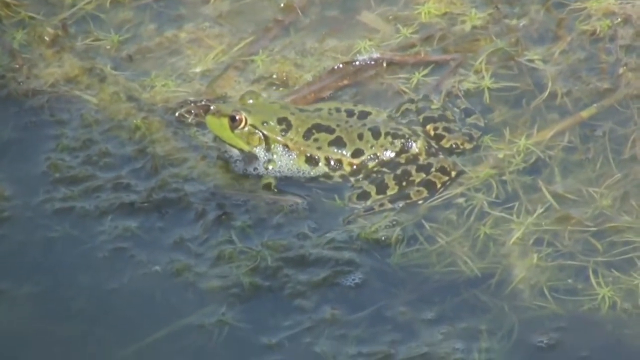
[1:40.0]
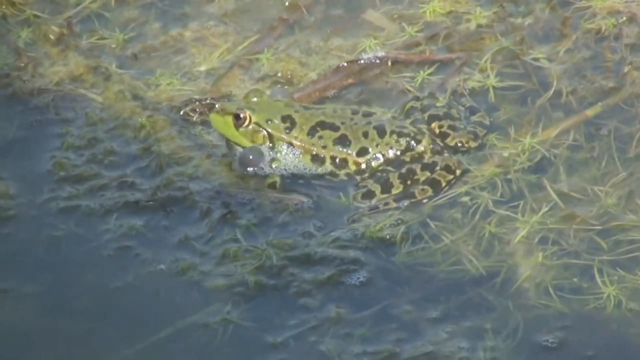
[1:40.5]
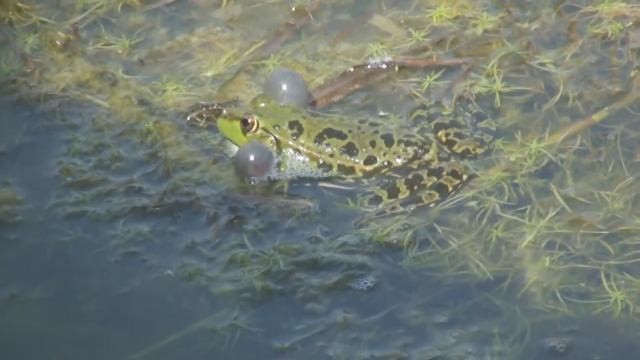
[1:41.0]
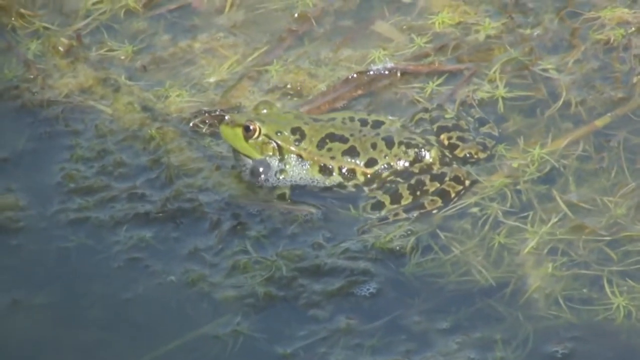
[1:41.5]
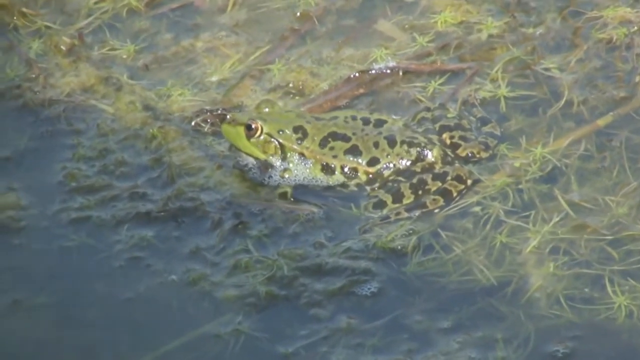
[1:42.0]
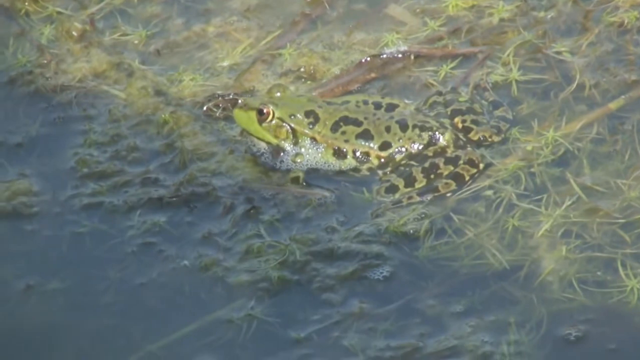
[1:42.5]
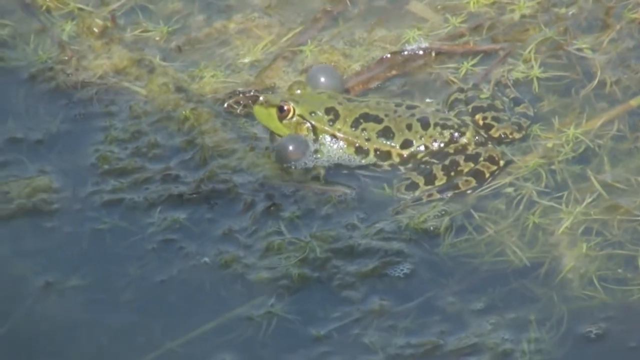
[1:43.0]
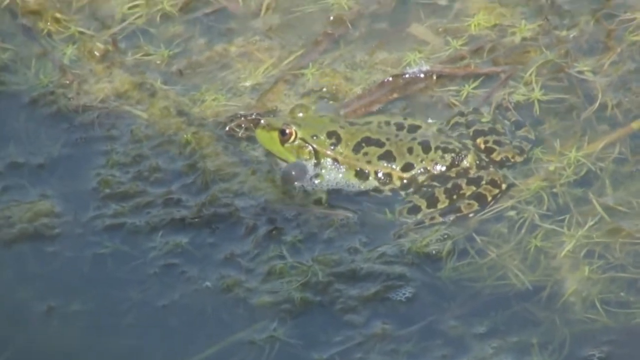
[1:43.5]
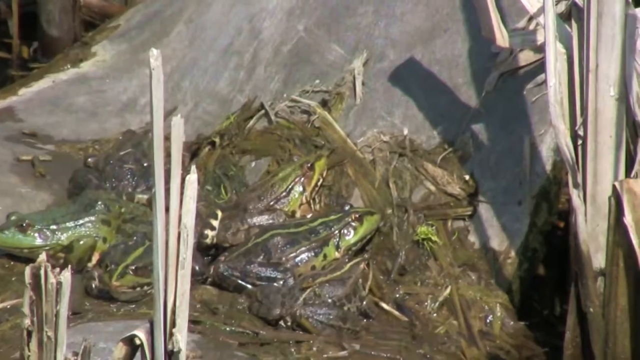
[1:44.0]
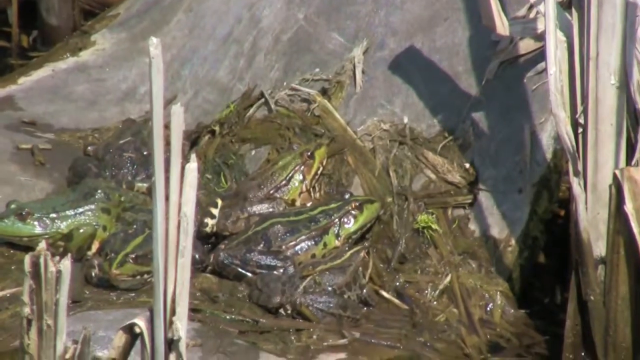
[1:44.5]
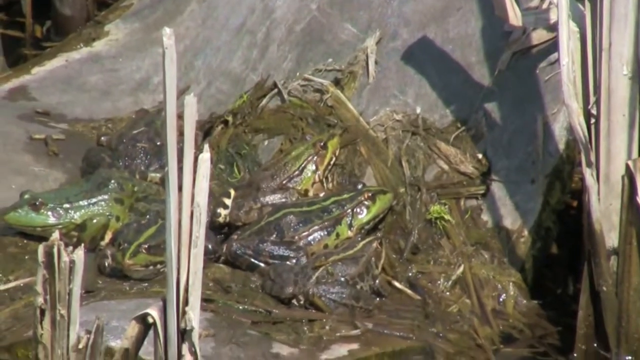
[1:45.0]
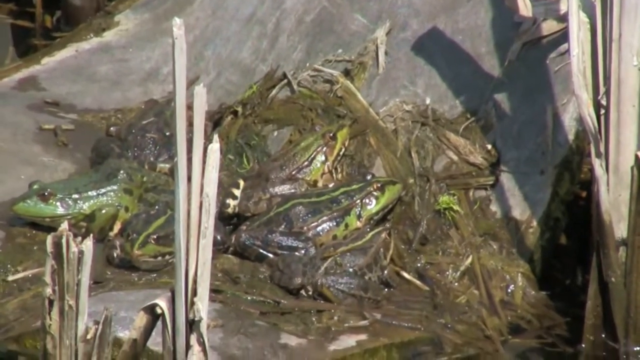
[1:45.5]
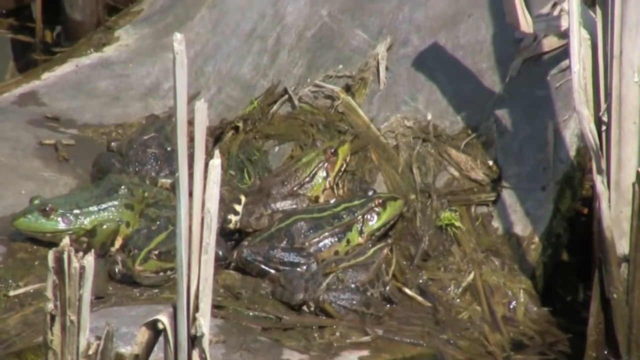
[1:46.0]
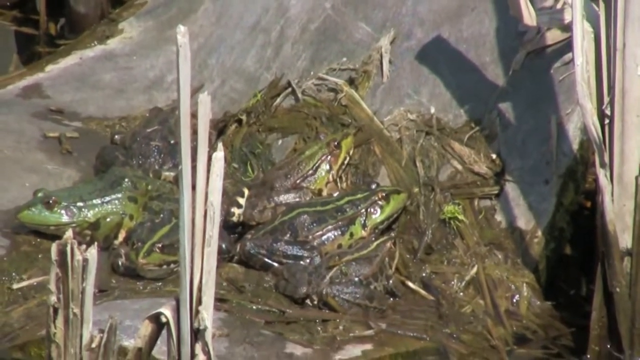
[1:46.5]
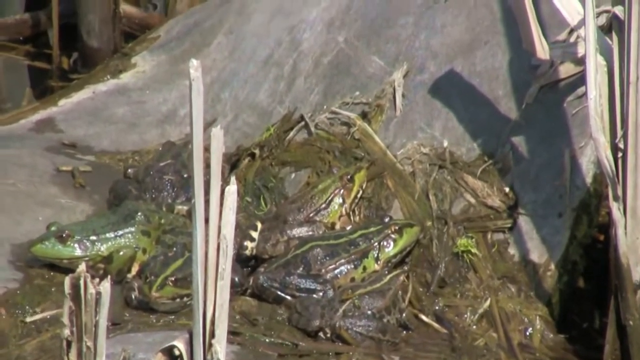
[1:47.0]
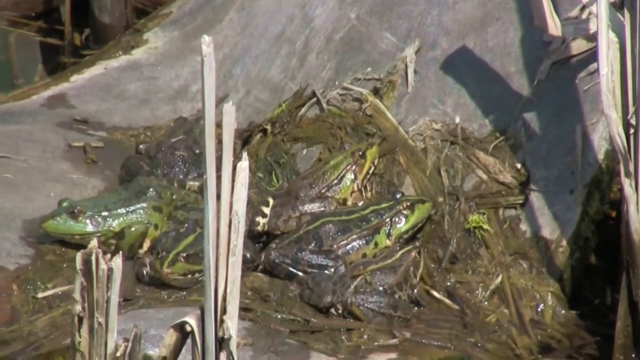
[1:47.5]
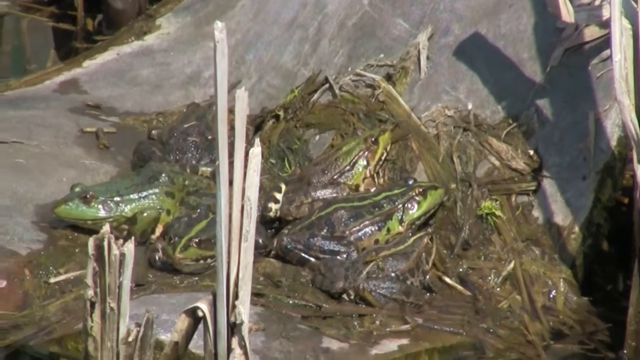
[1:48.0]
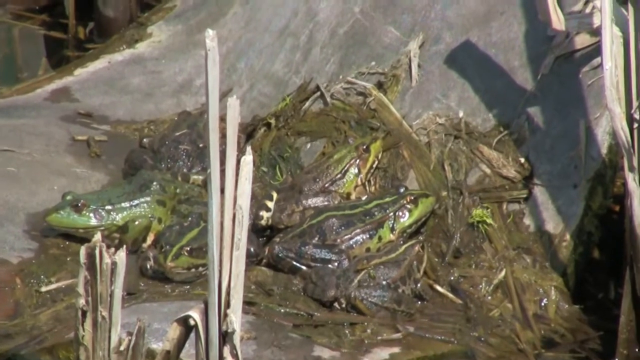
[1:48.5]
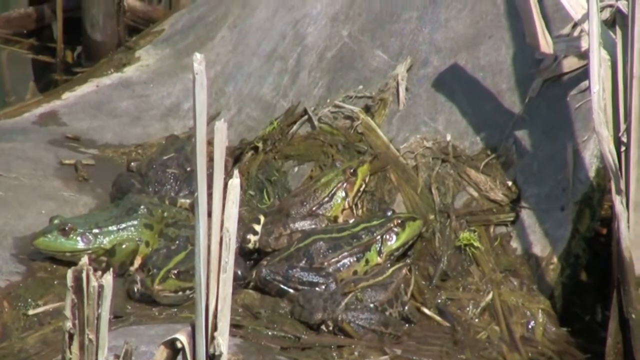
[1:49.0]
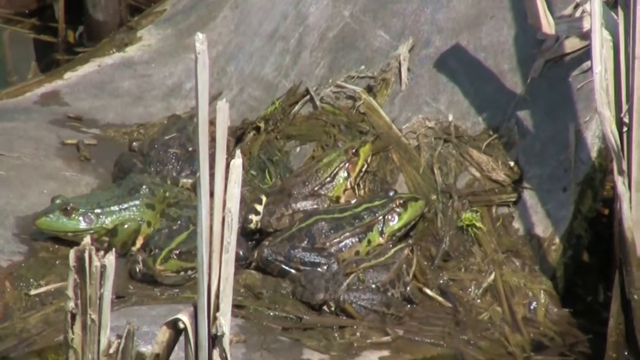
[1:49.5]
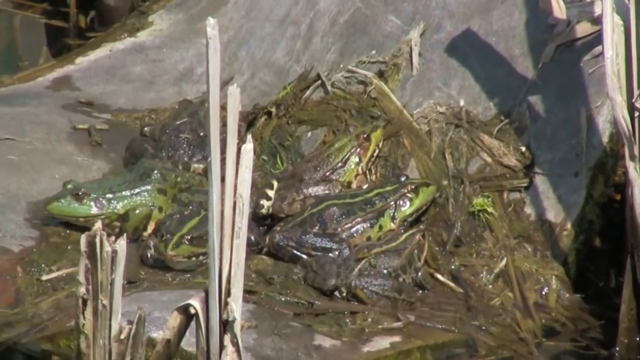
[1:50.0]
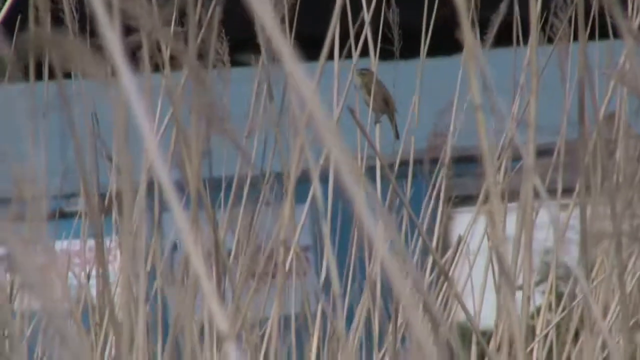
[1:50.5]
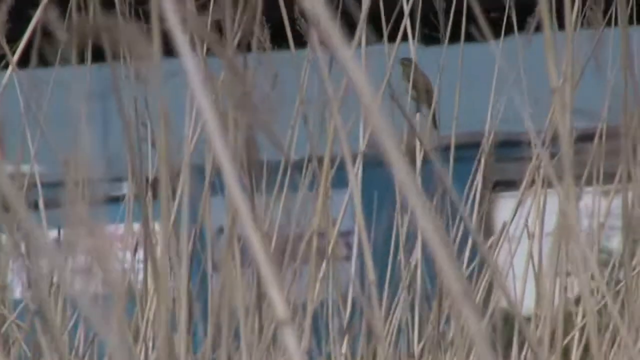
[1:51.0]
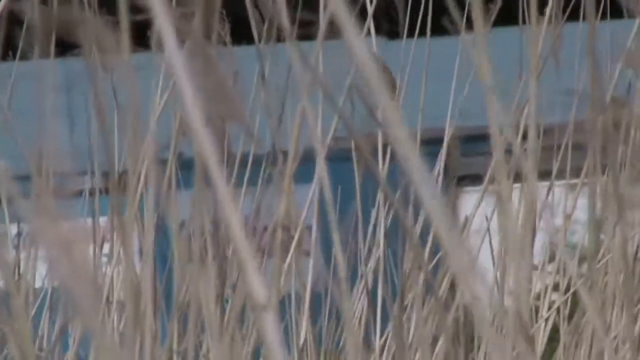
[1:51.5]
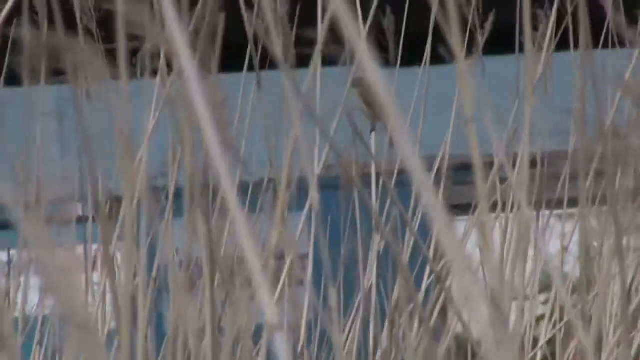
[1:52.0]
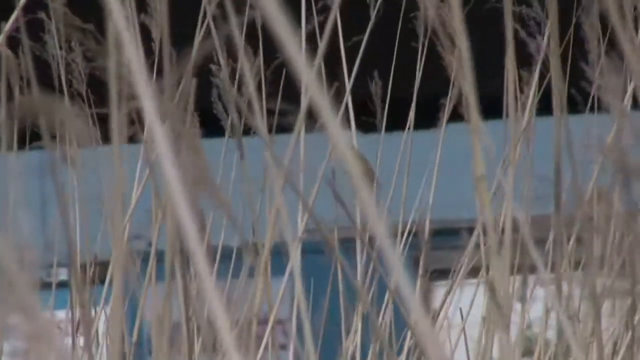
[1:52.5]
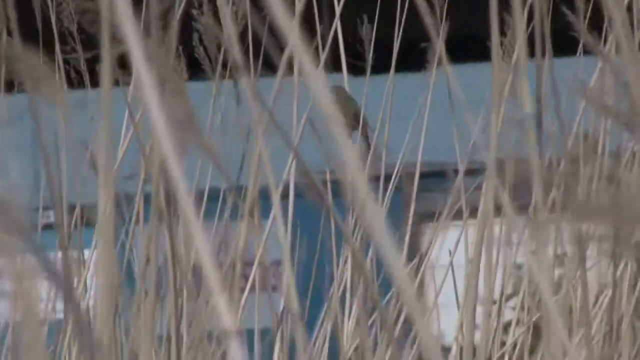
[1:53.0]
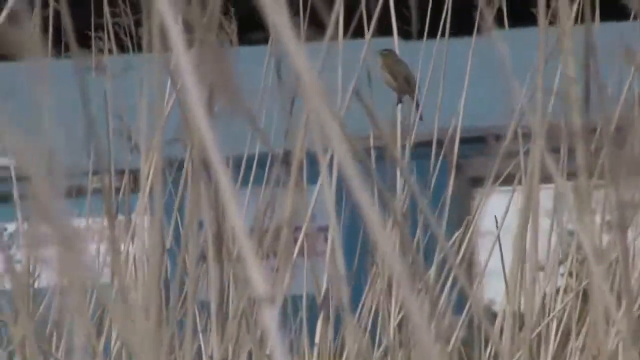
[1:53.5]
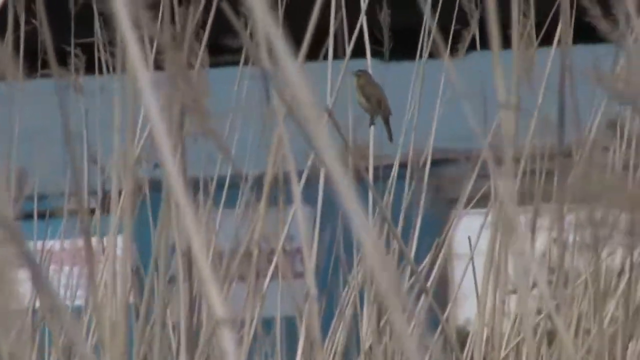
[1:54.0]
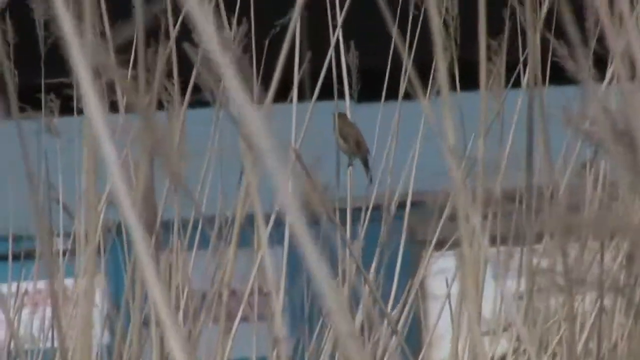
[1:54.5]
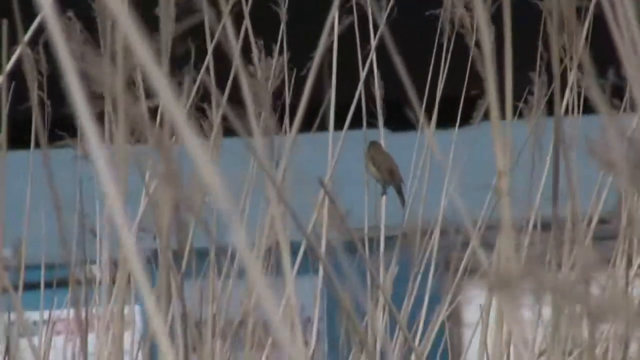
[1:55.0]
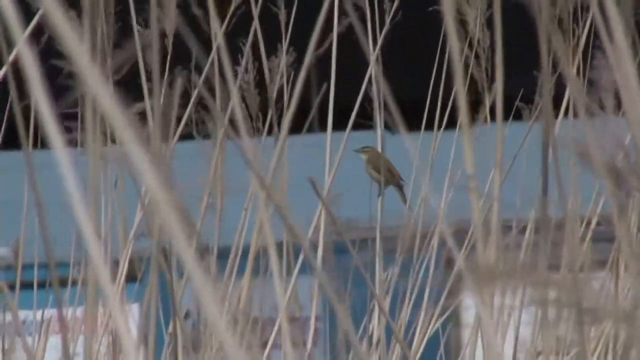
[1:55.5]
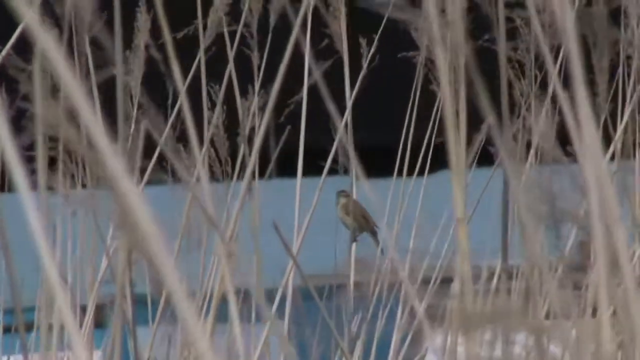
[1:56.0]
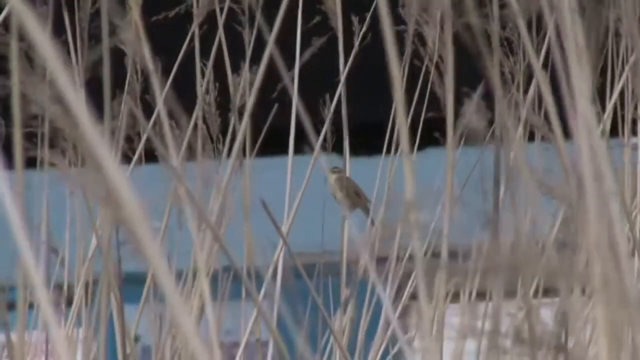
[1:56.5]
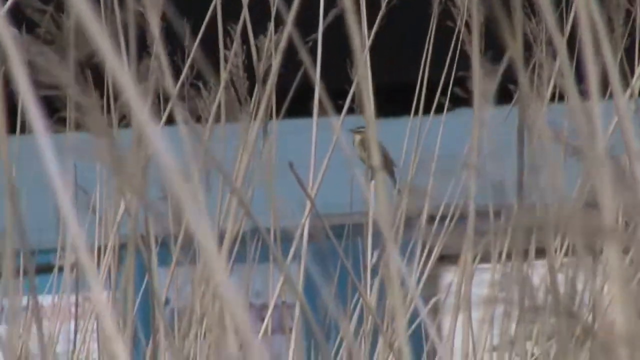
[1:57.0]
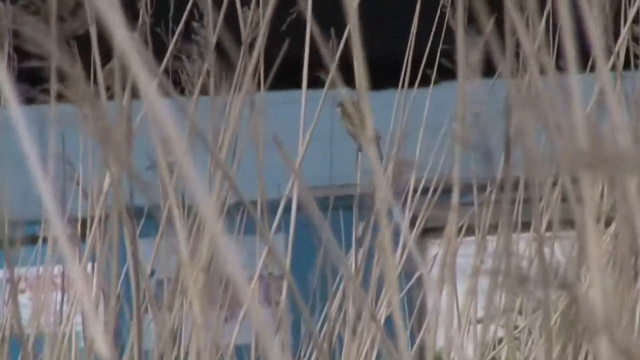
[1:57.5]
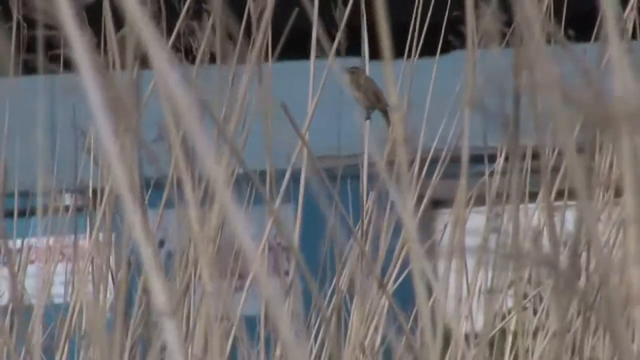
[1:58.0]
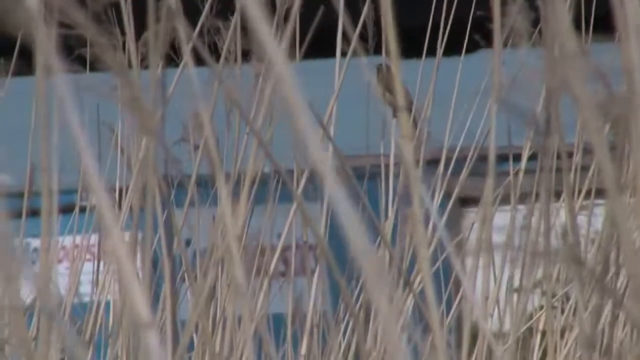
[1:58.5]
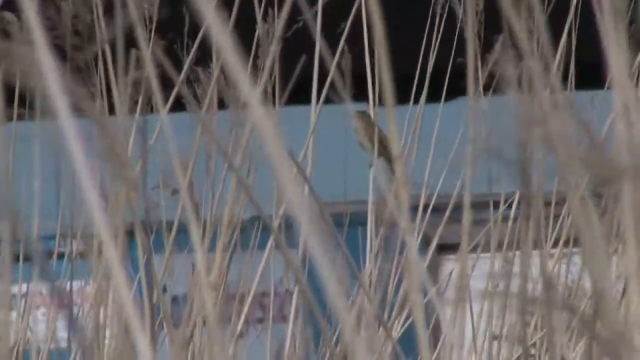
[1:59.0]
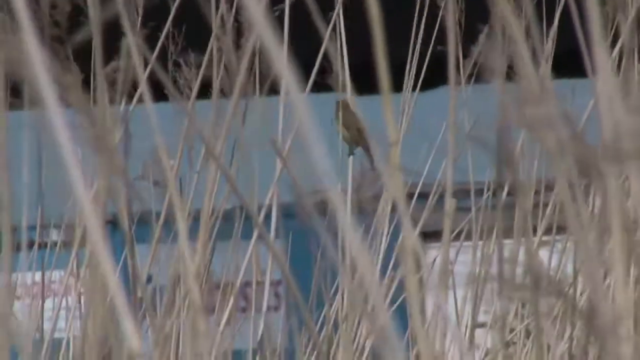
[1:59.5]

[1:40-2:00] A frog is in a large pond with grass in it, and as it breathes, its lungs or gills inflate like bubbles on either side of its head. The water is very shallow, and the frog is standing still without having to swim. Small green grass or plants fill the water. The video then switches to three or four of these frogs, green with lots of black markings on their bodies; it is unclear whether that is their skin colour or possibly mud on top of their bodies. The frogs are standing in place, not really moving, in the sun. They seem to be in a pile of green reeds, not in the water but maybe beside it, as there are some dry reeds around them. The camera is a bit shaky. The video then switches to a small grey bird sitting amongst some tall dry reeds. In the background is a blue building with a sign showing red writing on a white background, but the writing cannot be made out.